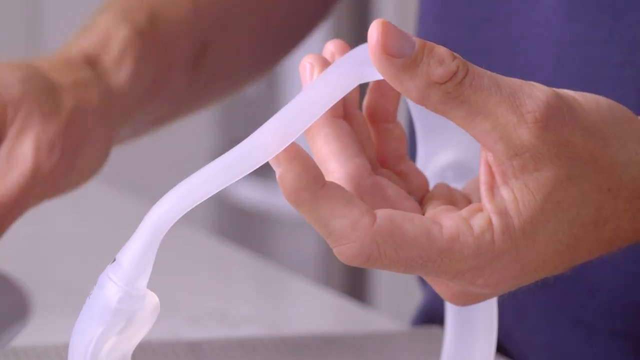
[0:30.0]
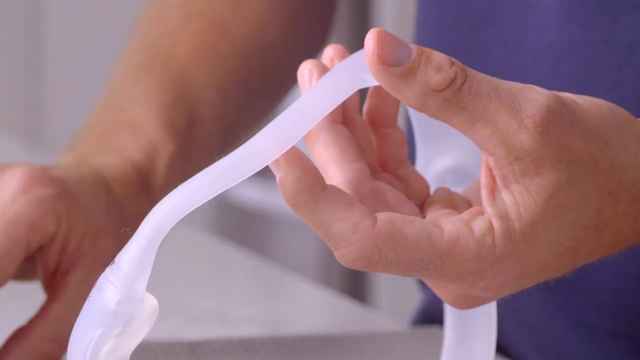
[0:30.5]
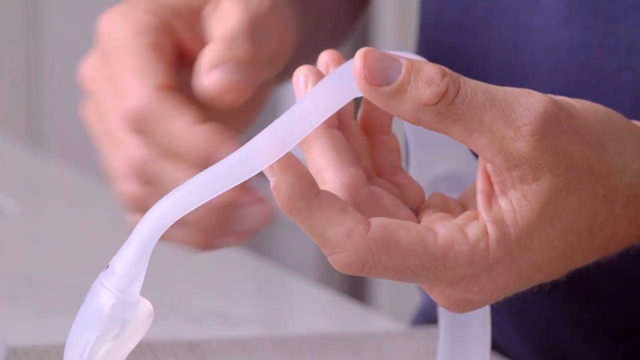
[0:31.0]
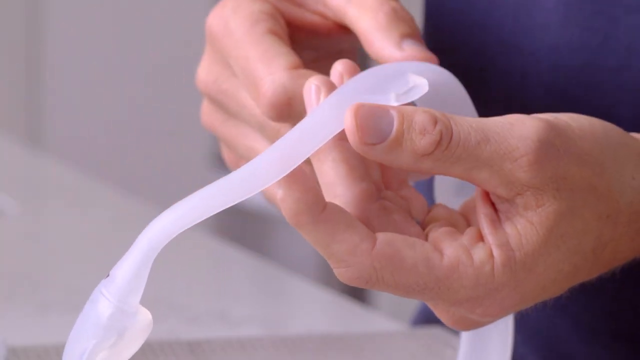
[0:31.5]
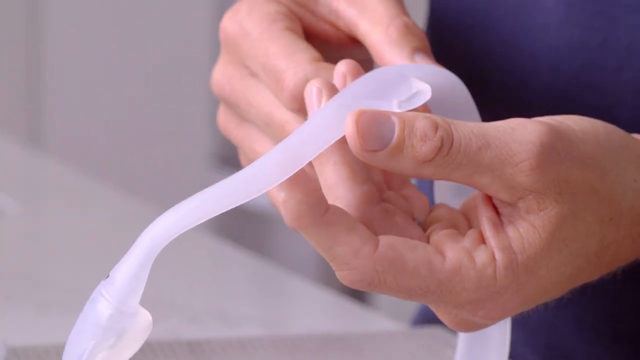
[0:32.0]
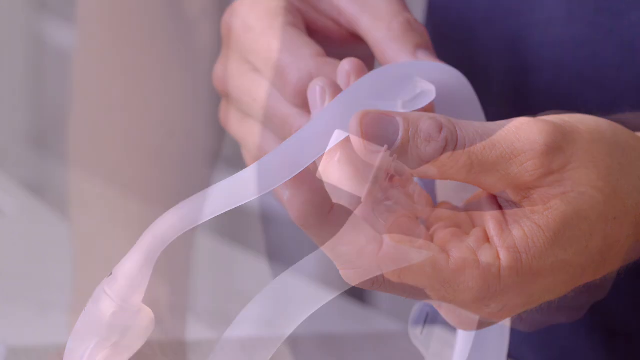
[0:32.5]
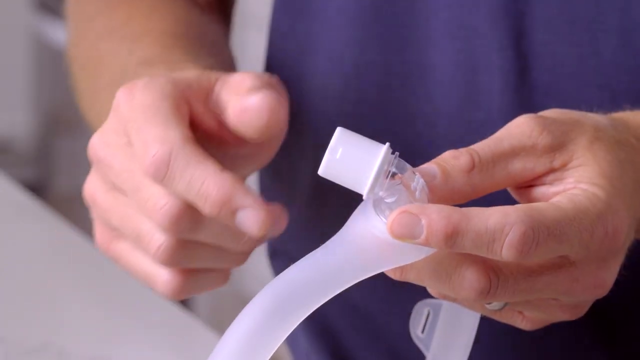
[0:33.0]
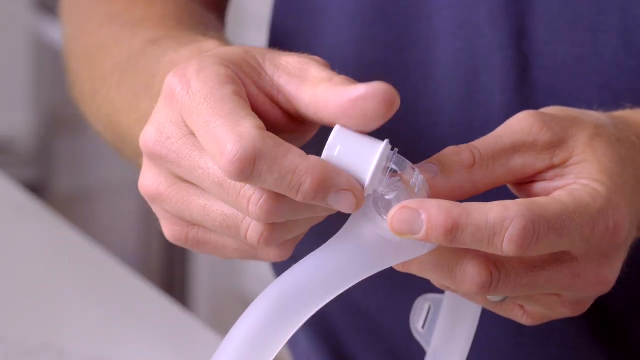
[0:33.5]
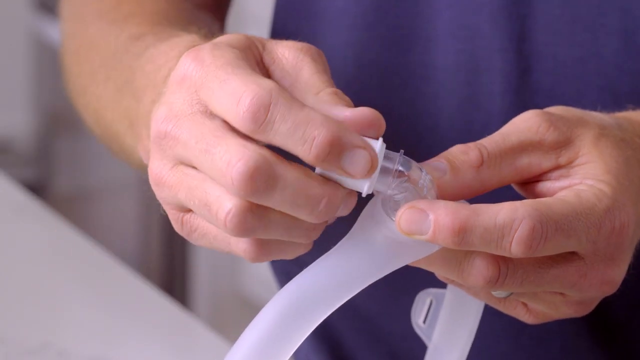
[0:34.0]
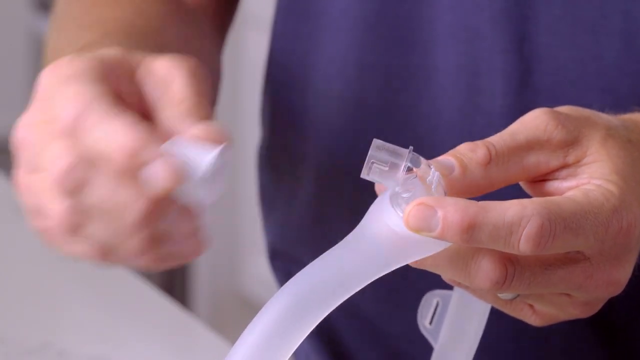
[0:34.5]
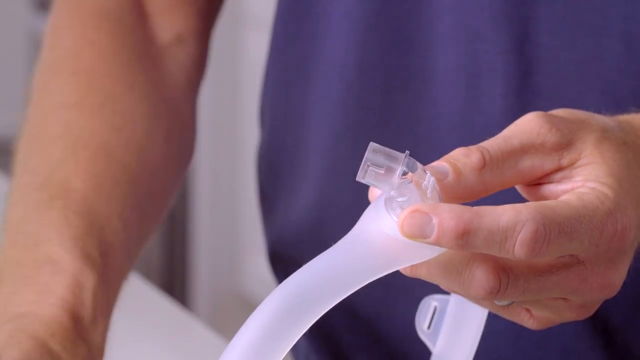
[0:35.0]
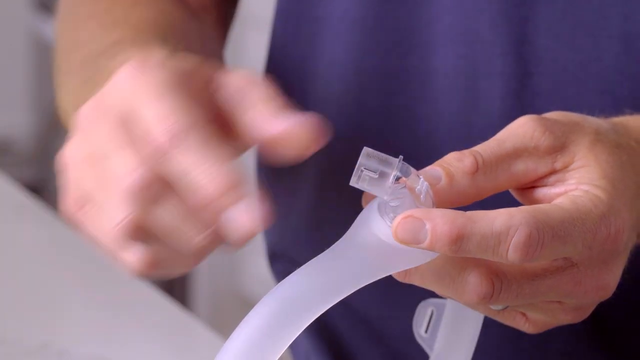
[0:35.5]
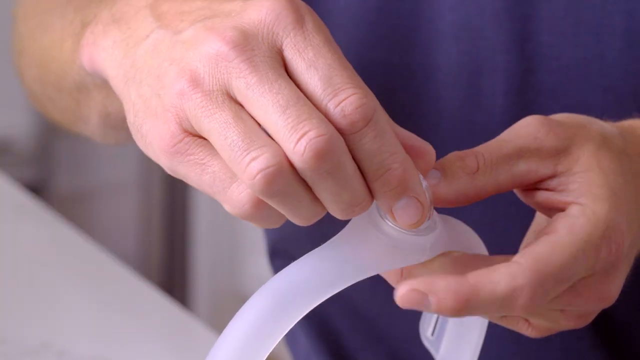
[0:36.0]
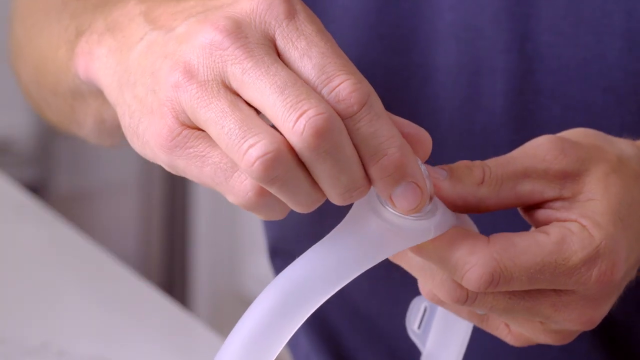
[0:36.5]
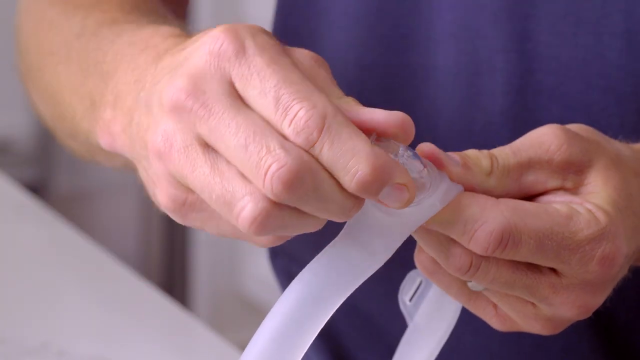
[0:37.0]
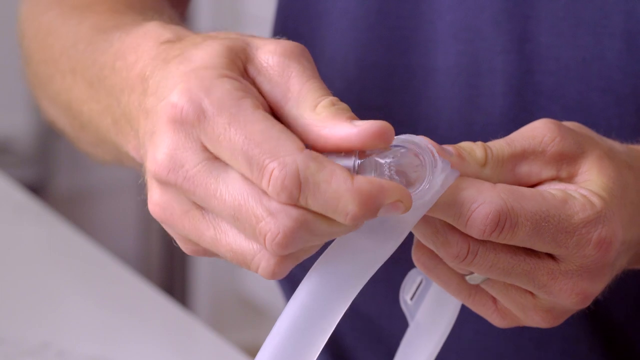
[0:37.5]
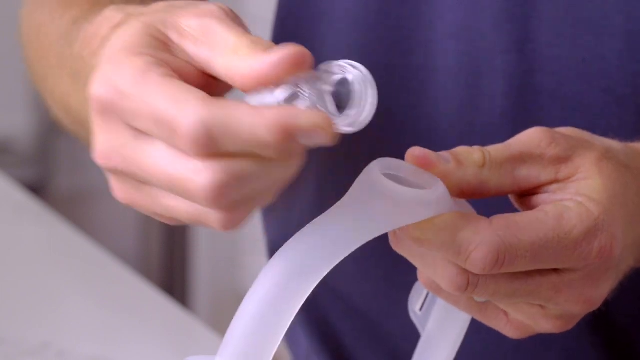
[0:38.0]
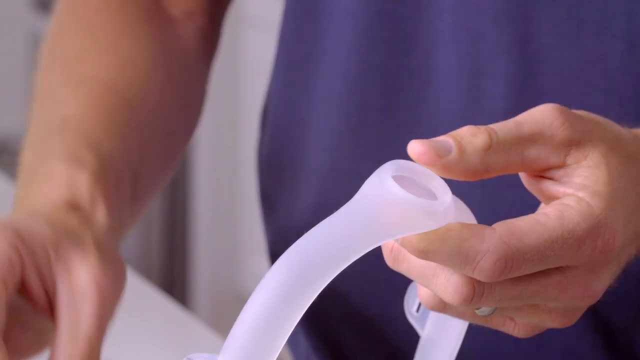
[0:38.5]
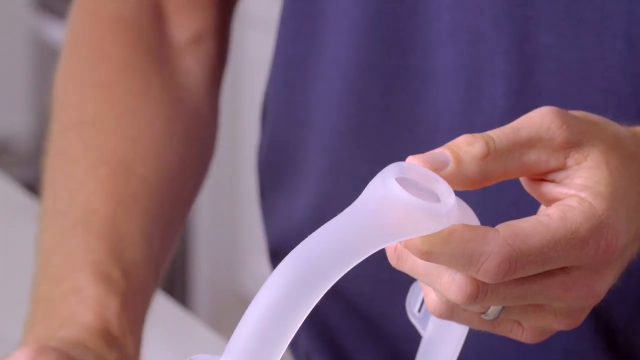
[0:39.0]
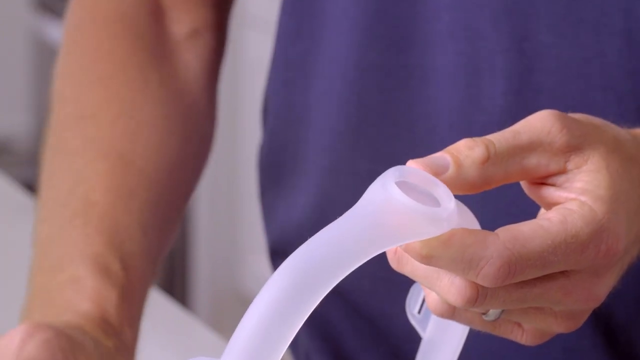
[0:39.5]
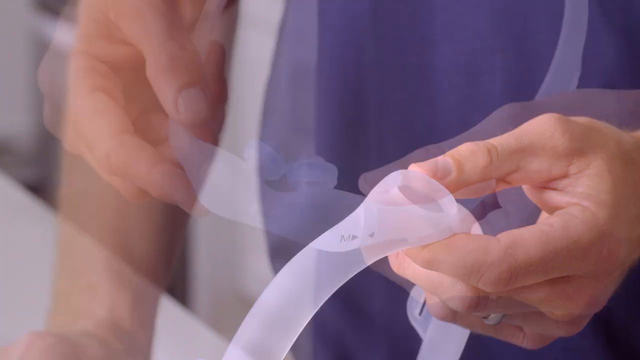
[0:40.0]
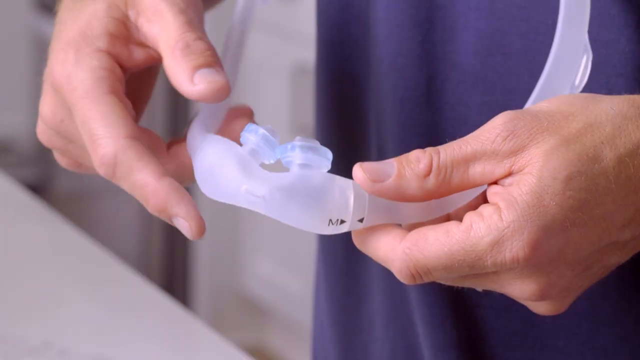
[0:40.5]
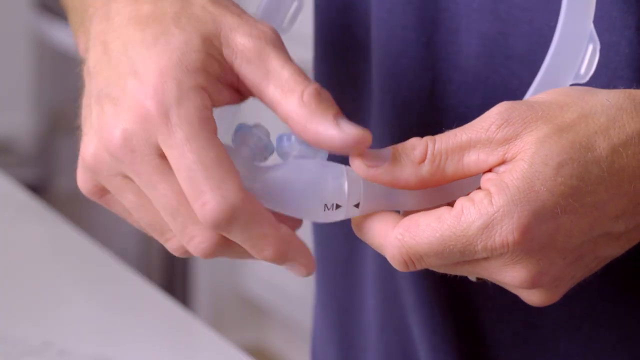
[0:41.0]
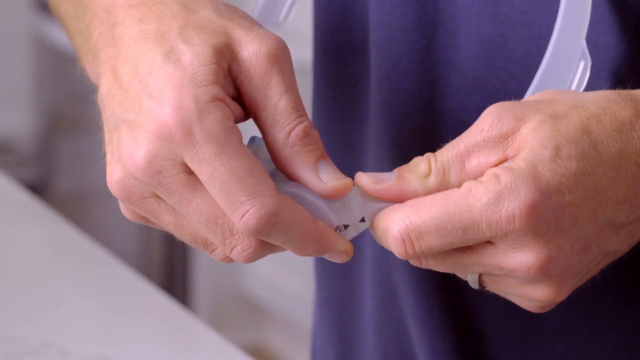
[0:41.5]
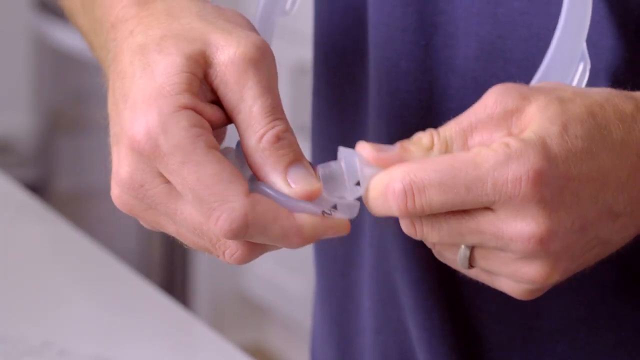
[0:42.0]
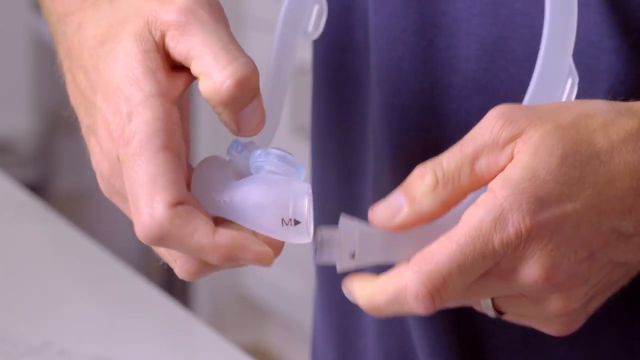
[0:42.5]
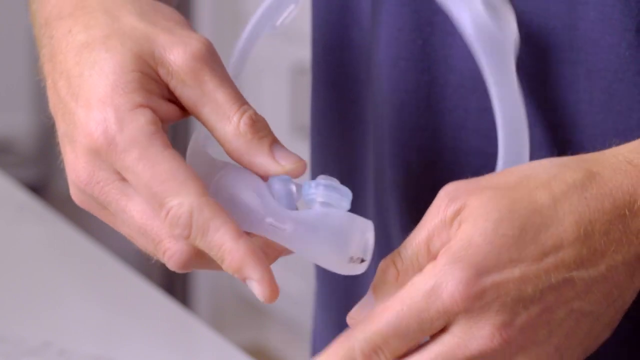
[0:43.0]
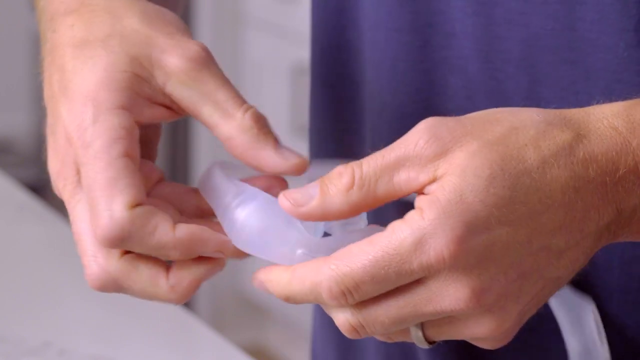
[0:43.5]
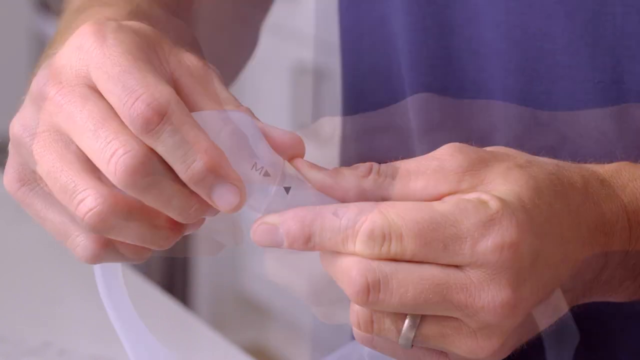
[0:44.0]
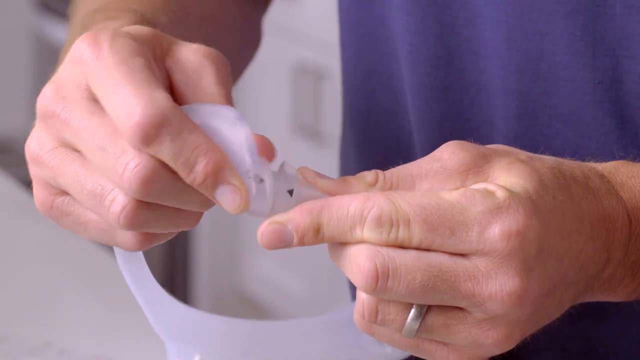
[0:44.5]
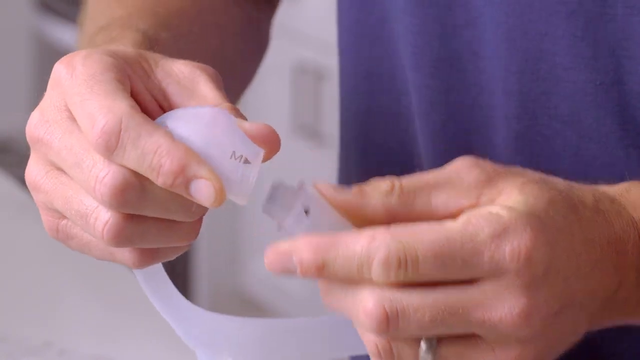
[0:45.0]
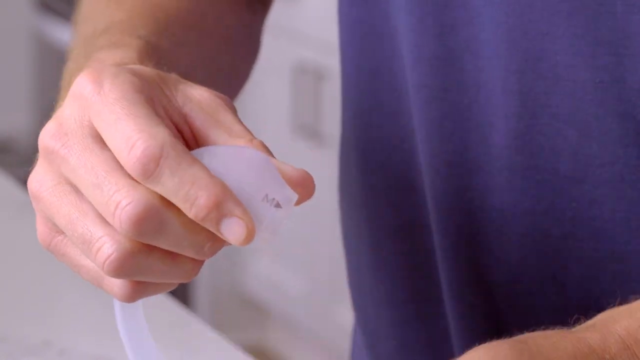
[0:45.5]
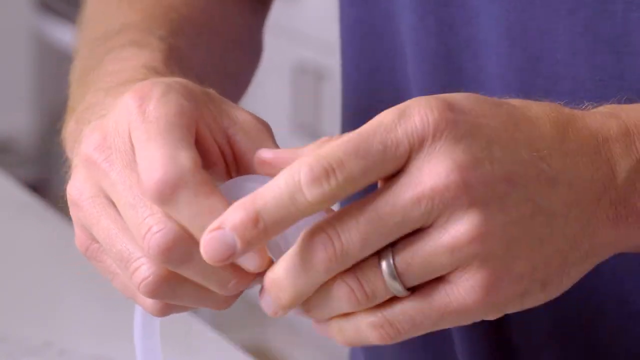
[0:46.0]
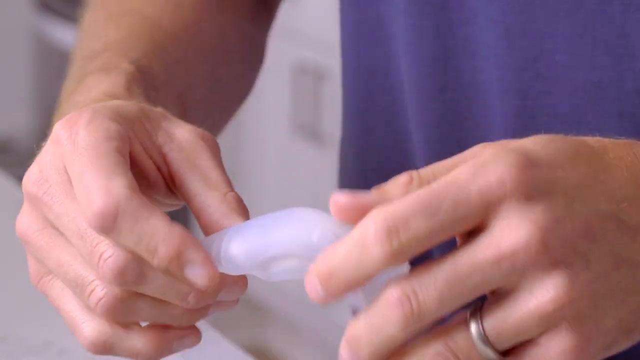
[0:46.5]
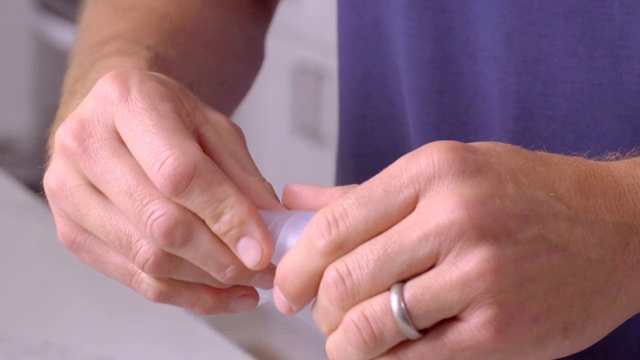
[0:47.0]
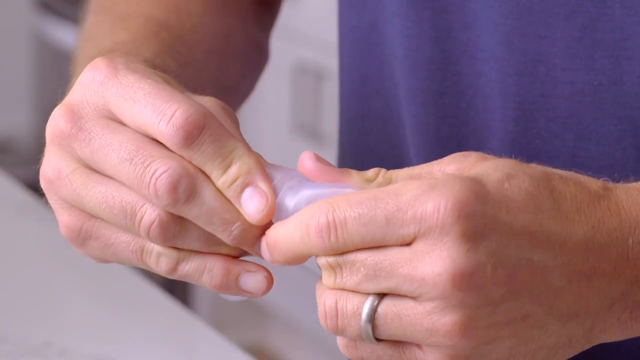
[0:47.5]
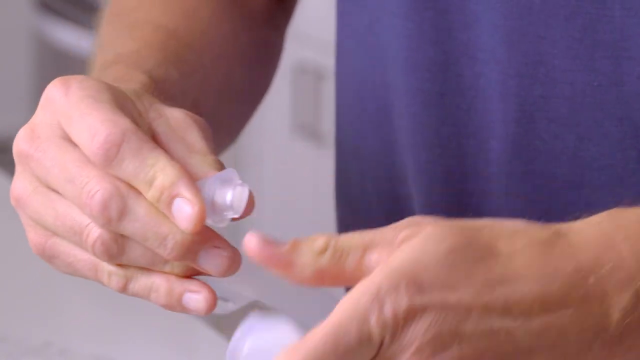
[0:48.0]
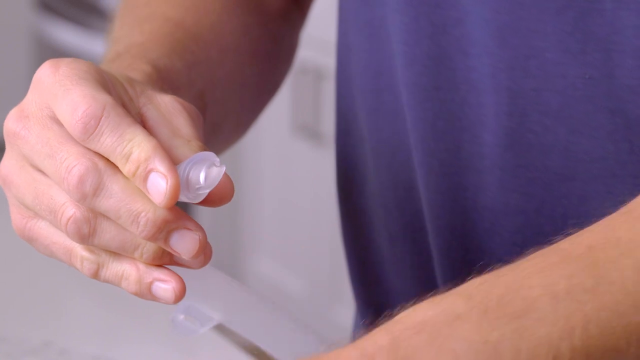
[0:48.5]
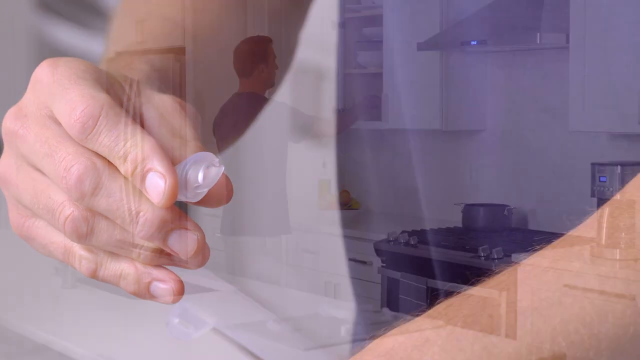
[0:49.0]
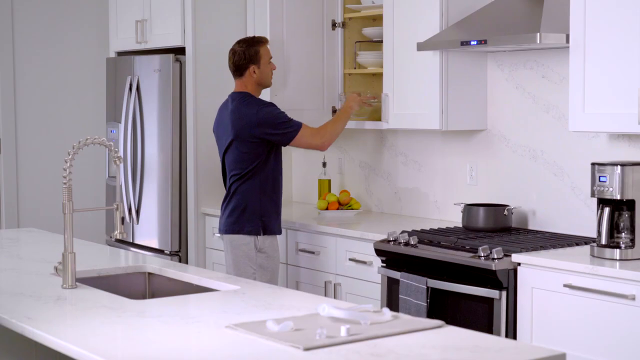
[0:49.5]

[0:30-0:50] The same man unscrews something from the cap area of the mask: a very clear-looking part, almost like a scuba-diving mouthpiece, resembling a thick straw. He takes it out, then tears off and unlatches other parts of the gel cushion. After unlatching all of them, he is shown for a split second looking at his cabinet and opening it, and he gets something from it. The cabinet is basically right behind him. Near the end, some text at the bottom left is barely visible.